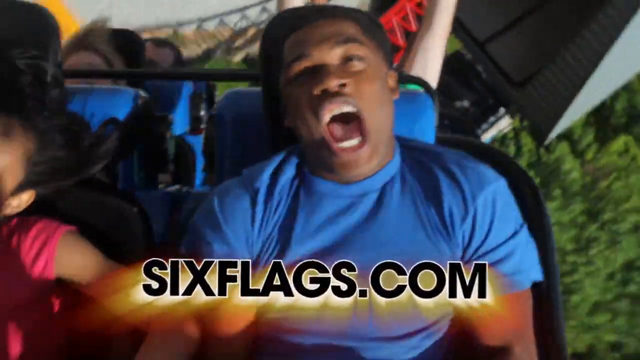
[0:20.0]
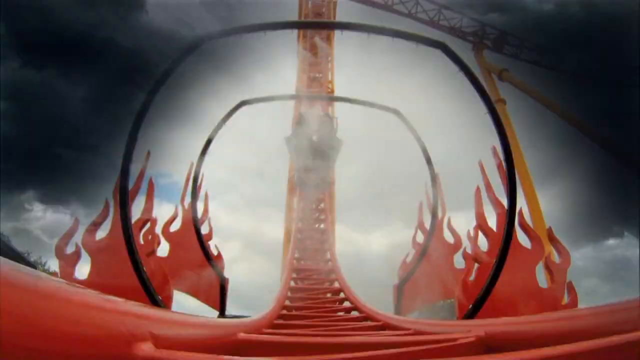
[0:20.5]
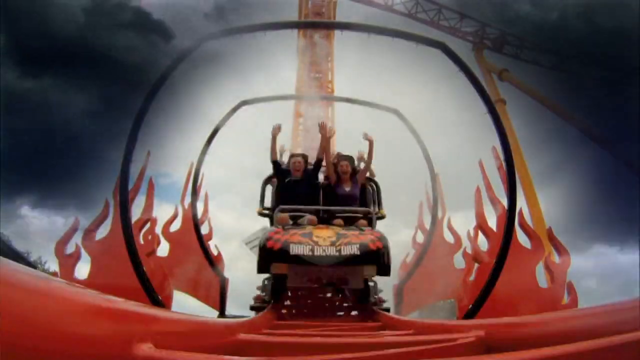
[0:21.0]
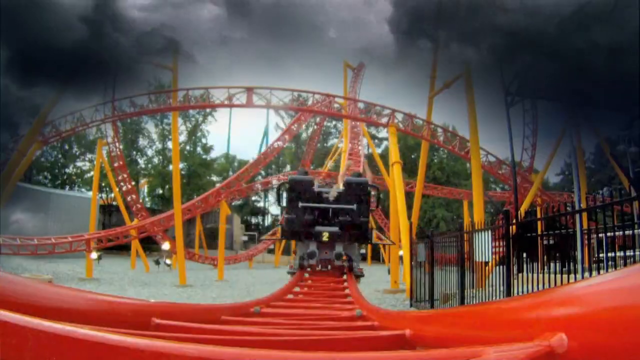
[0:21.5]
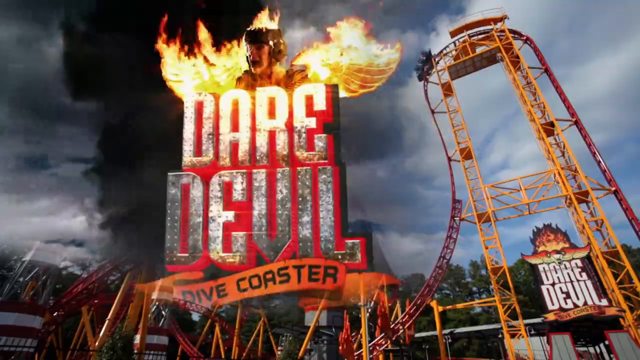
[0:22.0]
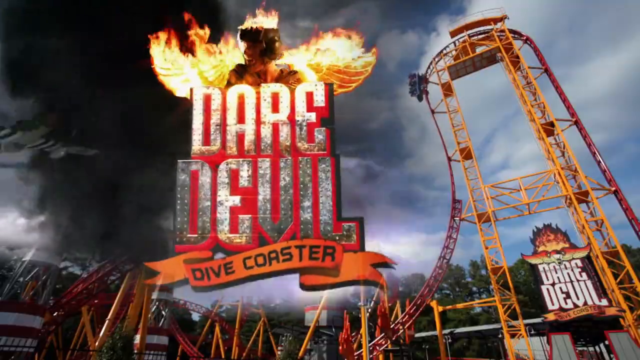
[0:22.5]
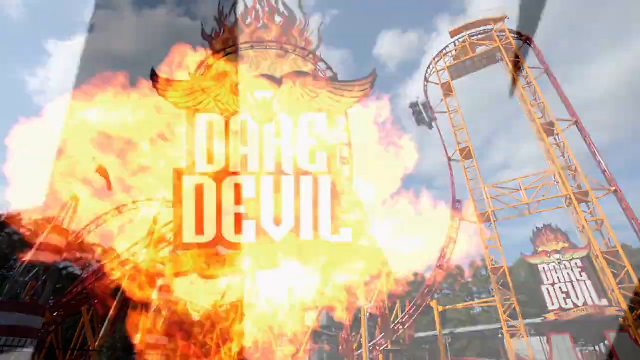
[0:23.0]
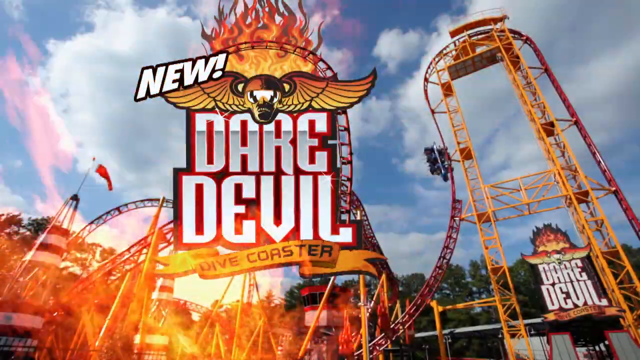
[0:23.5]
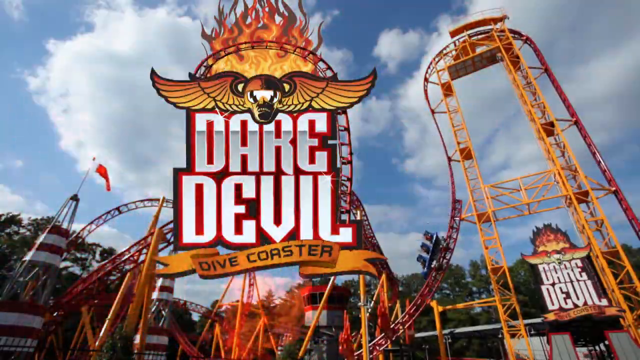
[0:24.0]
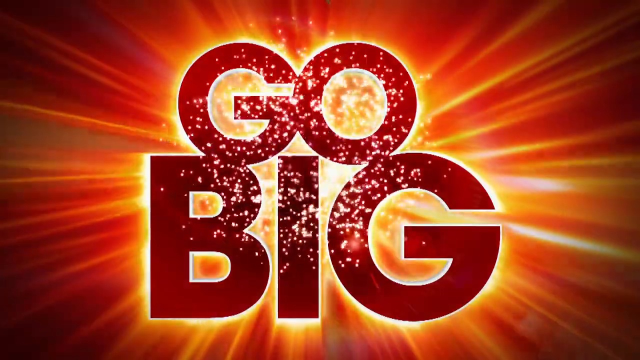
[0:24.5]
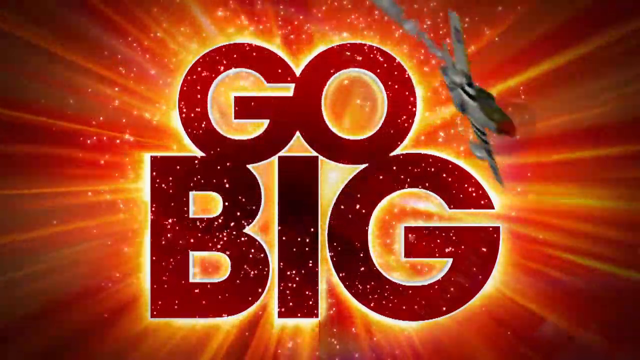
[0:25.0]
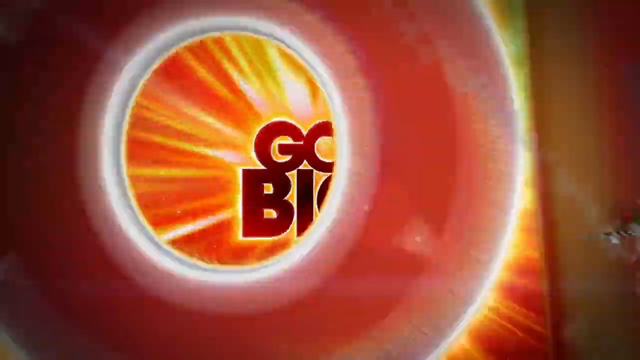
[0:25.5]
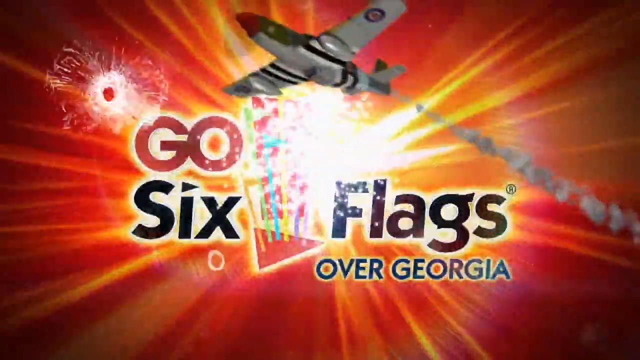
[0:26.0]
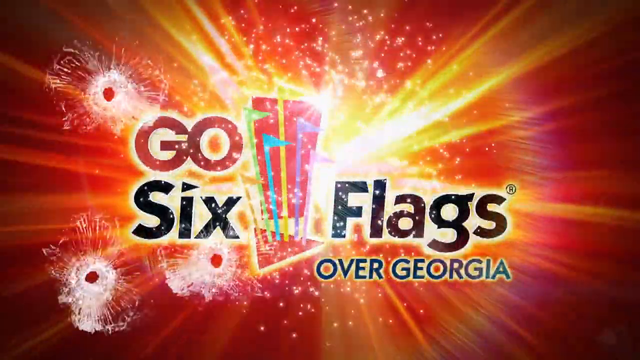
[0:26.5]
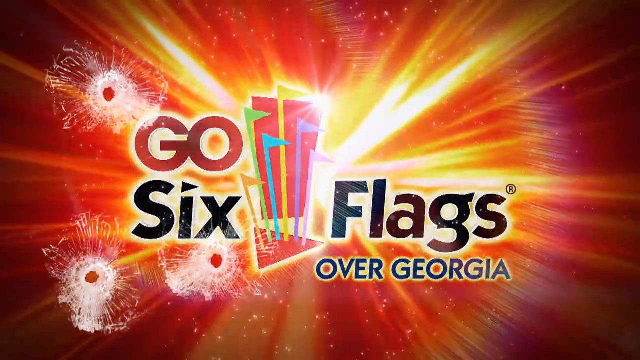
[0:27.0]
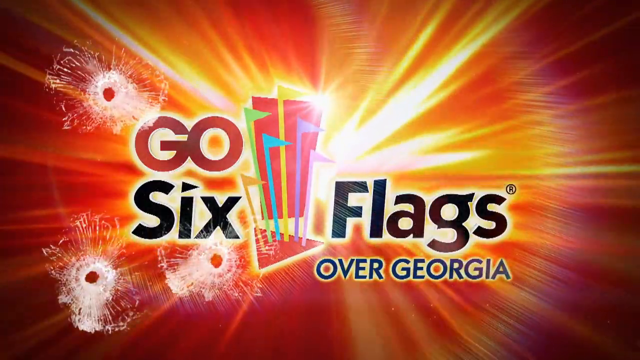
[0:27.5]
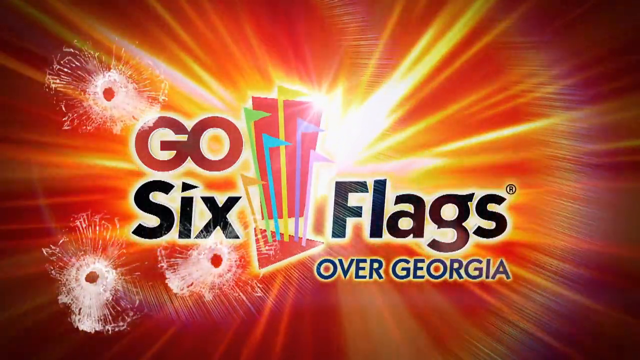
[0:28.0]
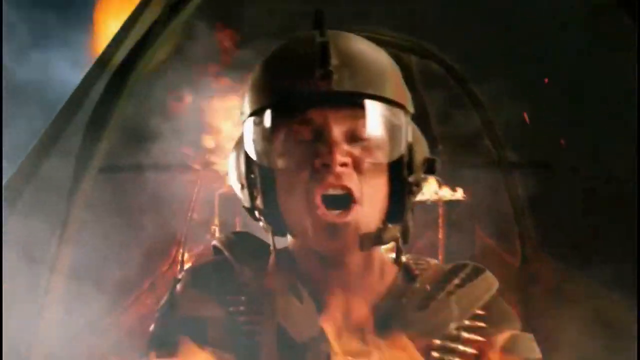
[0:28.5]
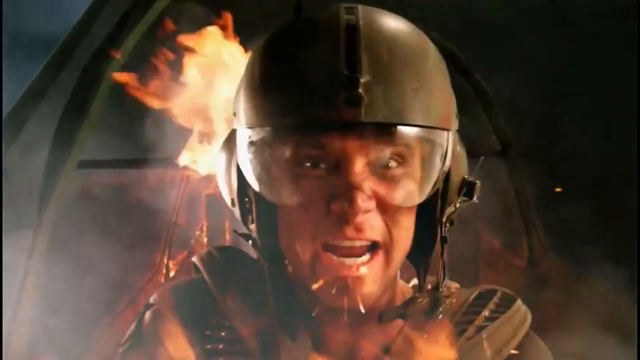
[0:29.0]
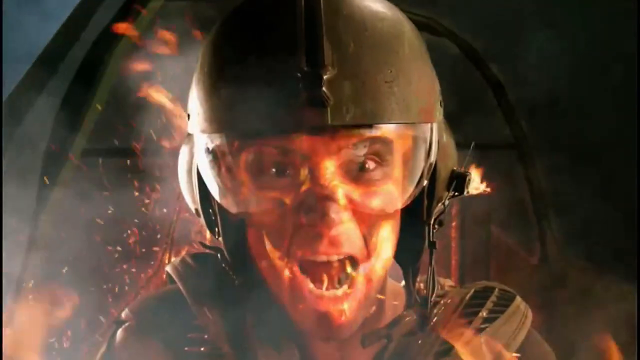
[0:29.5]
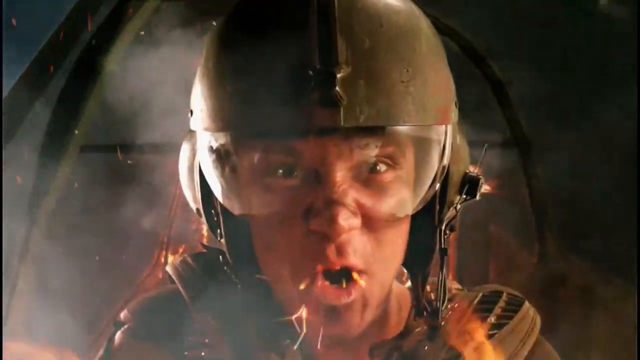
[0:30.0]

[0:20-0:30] A man in a blue shirt sits on a roller coaster that is going fast enough to spread his cheeks apart, with "sixflags.com" below him. The view changes to a camera on the roller coaster track, with the track leading away from the camera. The roller coaster comes down the track toward the camera, with some flames on either side of the track. The view switches to the roller coaster going away from the camera, which is on the track; the roller coaster is red and yellow. A wide shot then shows the roller coaster track going from right to left: it goes straight up and then curves down the other side. The words "Daredevil Dive Coaster" are on the left side, and at the top of them is a man with a helmet and fiery wings, a computer image placed in front of the coaster. The screen flashes and the man disappears, replaced by an icon of a helmet with safety glasses and two wings coming off it, with the word "new" above it. The words "GO BIG" then appear on the screen in dark lettering with a bright explosion around them. A plane flies from the top of the screen to the bottom right middle before coming back into the screen on the right side. The words change to "go Six Flags over Georgia," and what look like three bullet holes through glass appear over the Six Flags image on the left side. The video ends with the same man wearing a helmet and safety glasses; this time he appears to be in an airplane, with fire behind him.